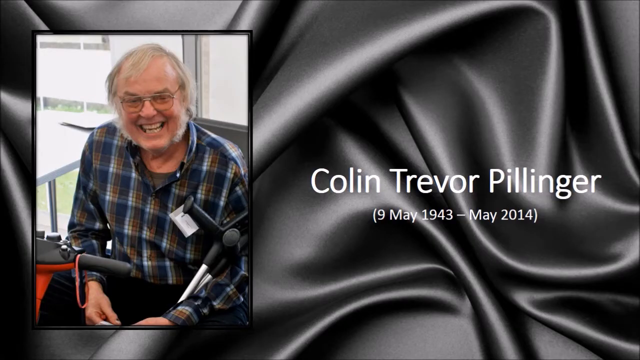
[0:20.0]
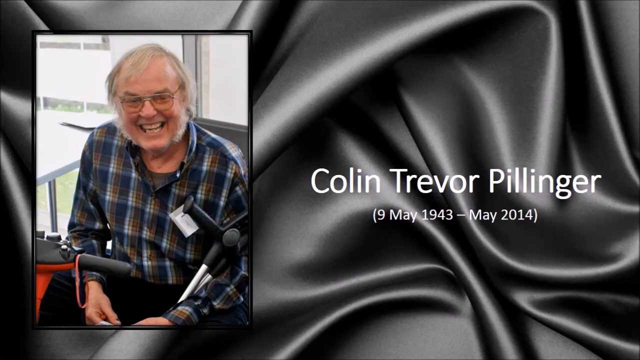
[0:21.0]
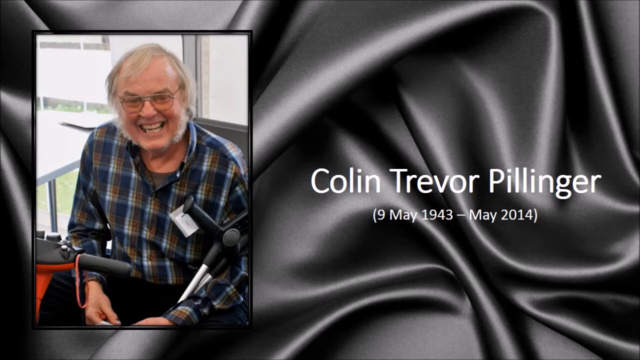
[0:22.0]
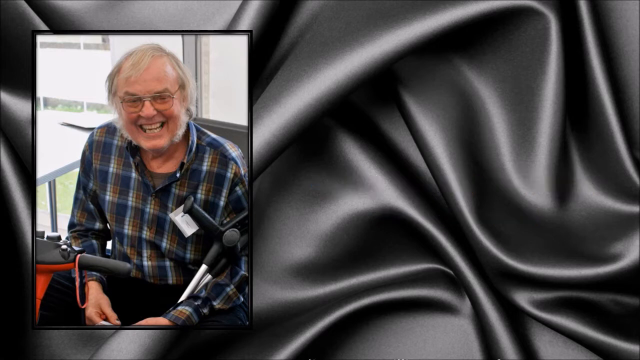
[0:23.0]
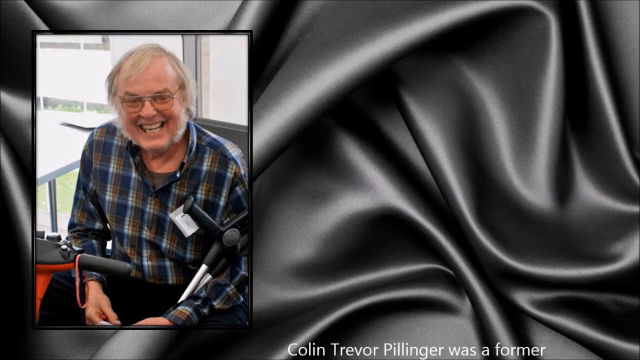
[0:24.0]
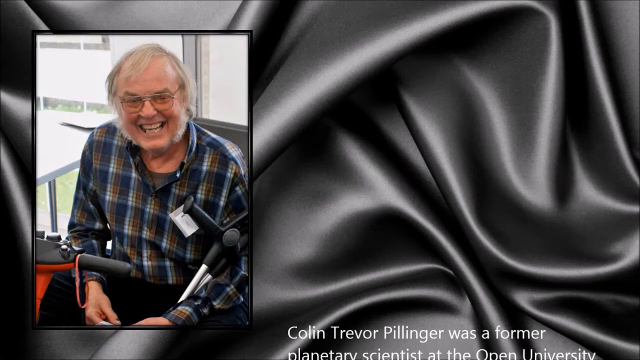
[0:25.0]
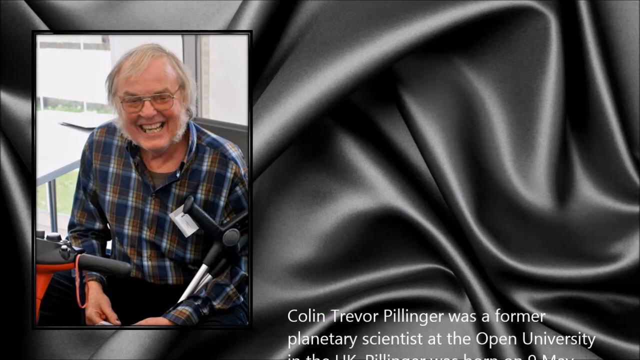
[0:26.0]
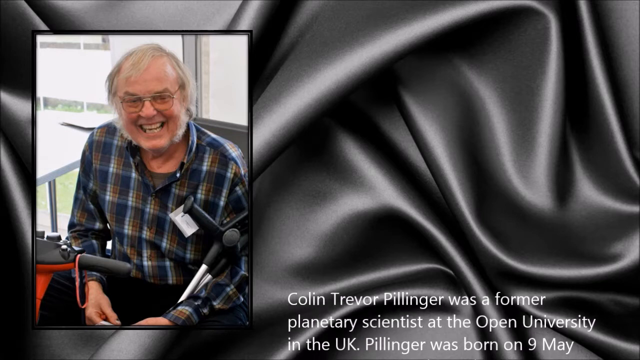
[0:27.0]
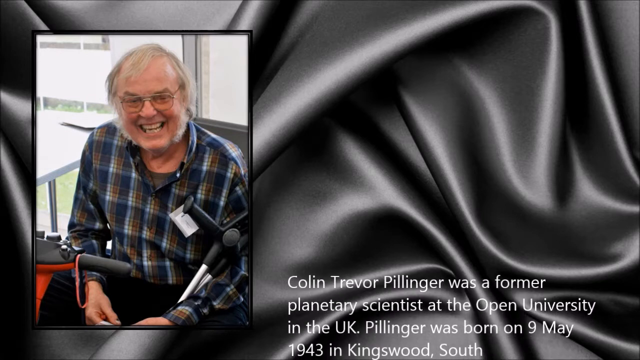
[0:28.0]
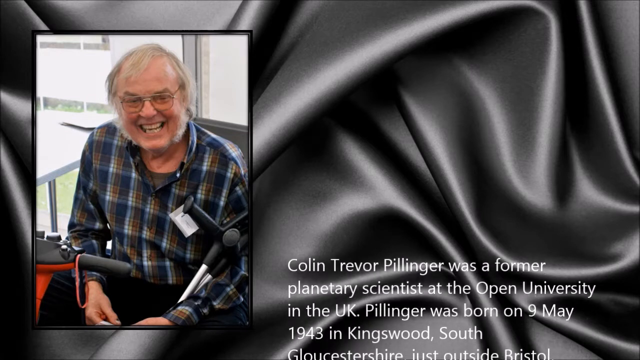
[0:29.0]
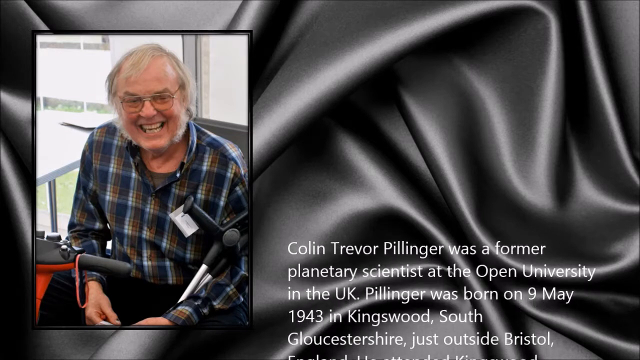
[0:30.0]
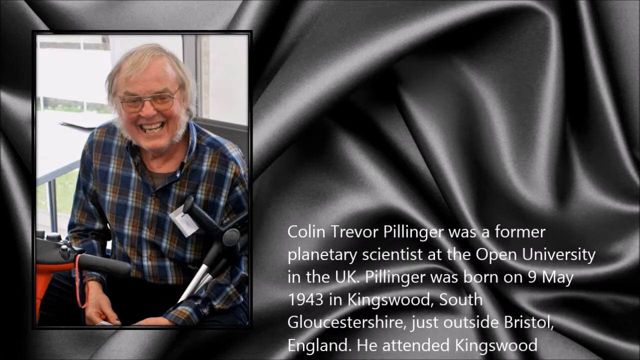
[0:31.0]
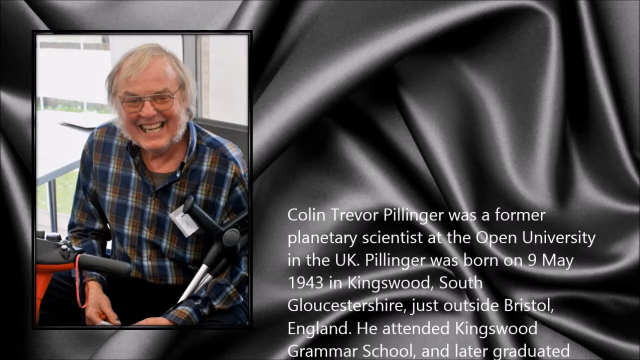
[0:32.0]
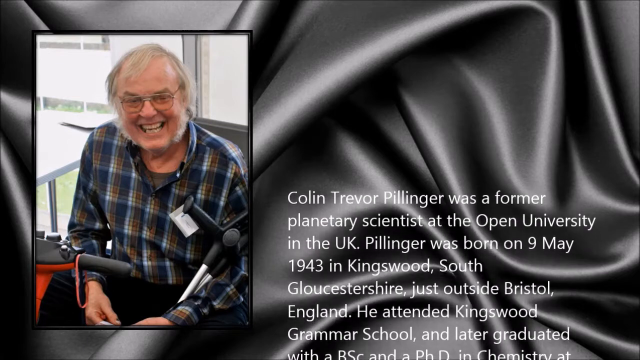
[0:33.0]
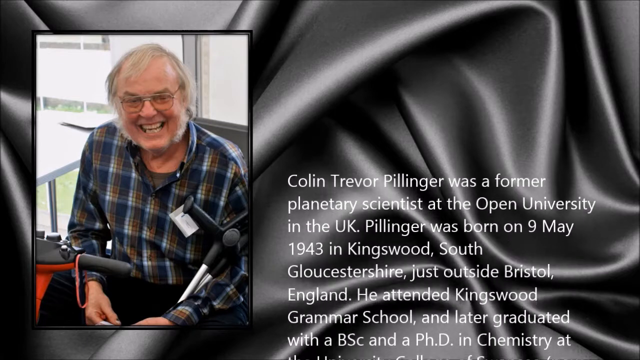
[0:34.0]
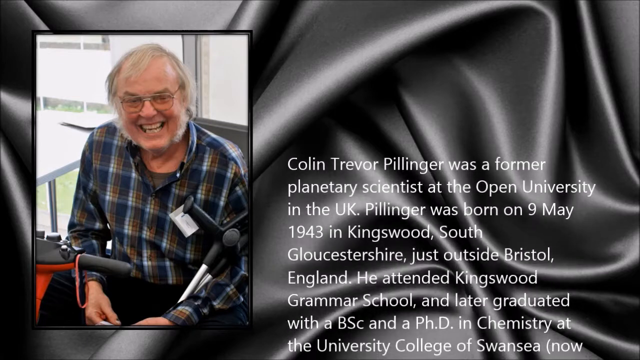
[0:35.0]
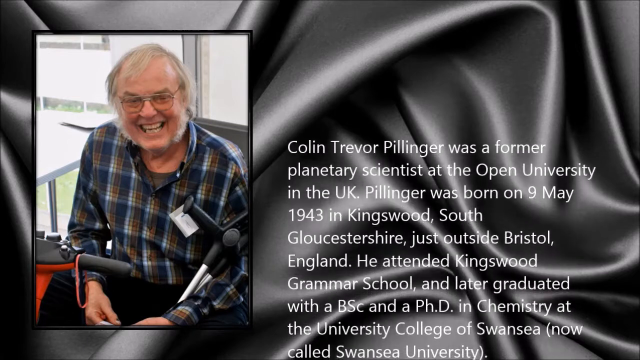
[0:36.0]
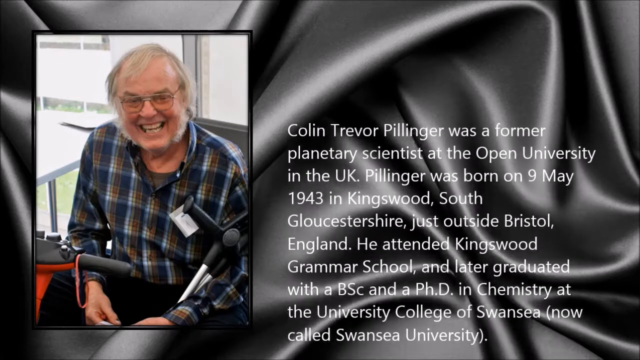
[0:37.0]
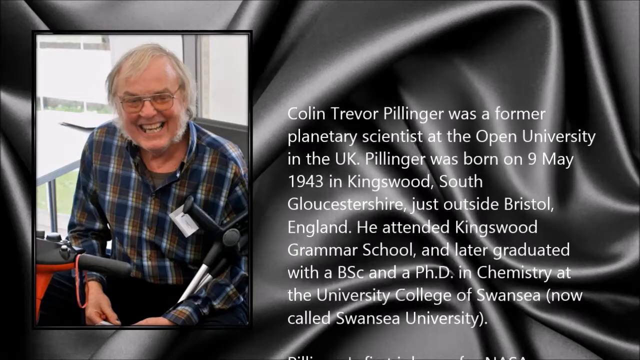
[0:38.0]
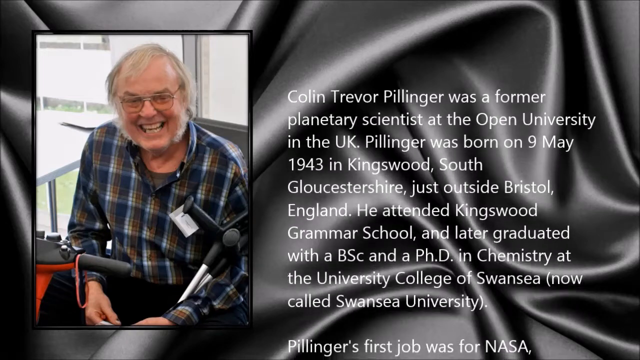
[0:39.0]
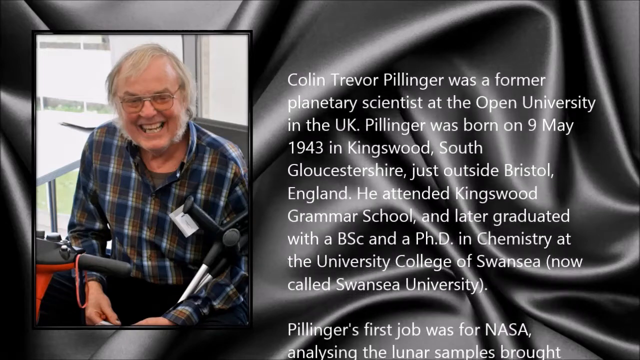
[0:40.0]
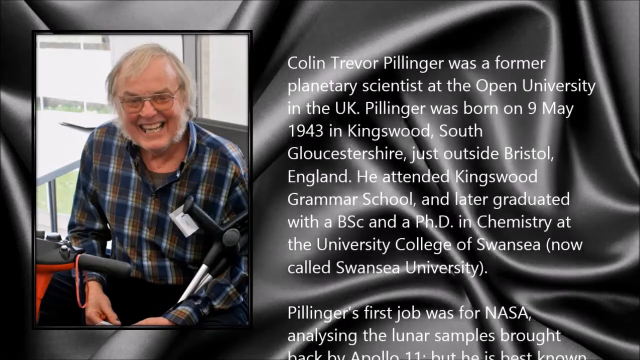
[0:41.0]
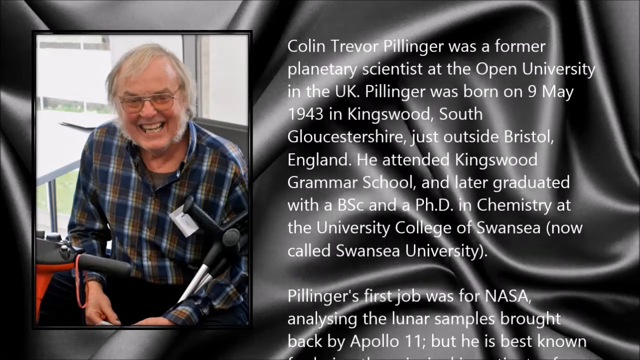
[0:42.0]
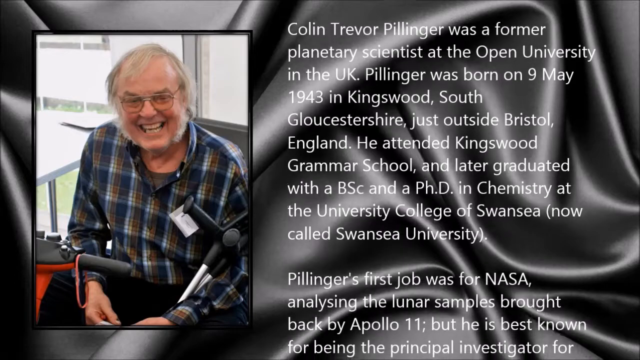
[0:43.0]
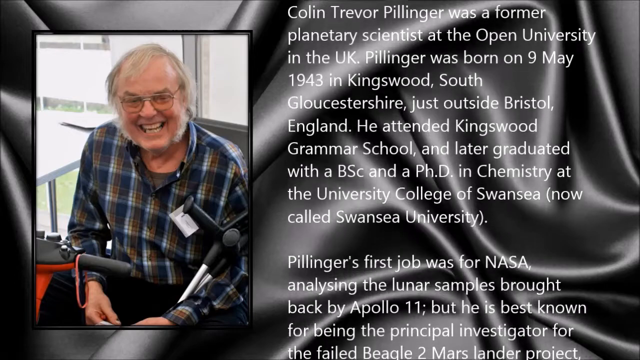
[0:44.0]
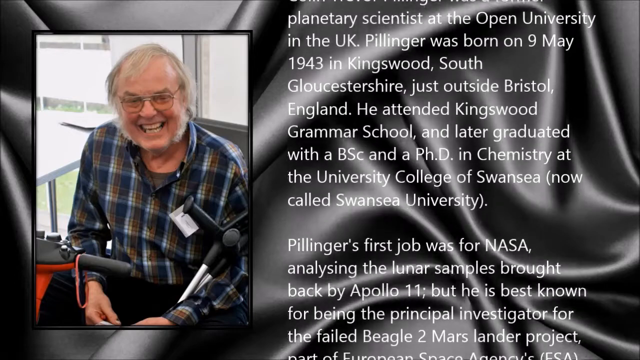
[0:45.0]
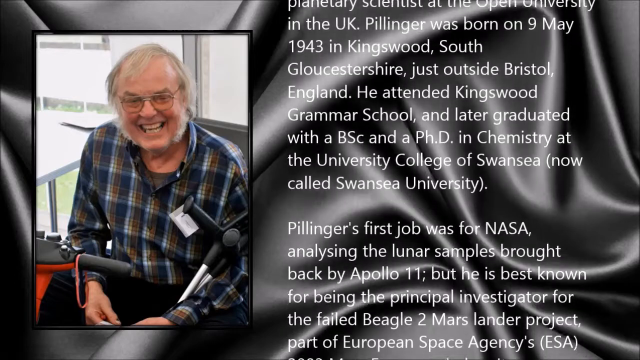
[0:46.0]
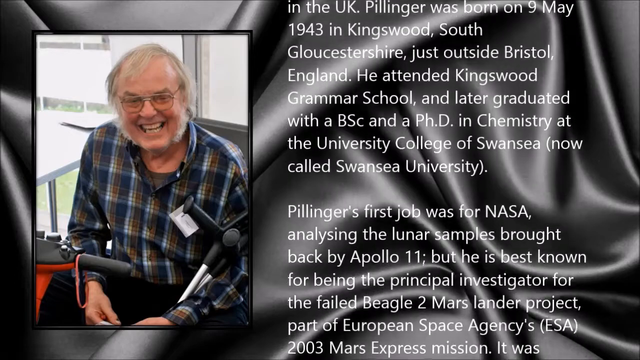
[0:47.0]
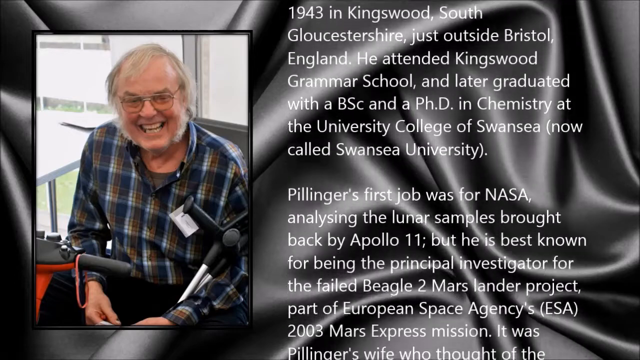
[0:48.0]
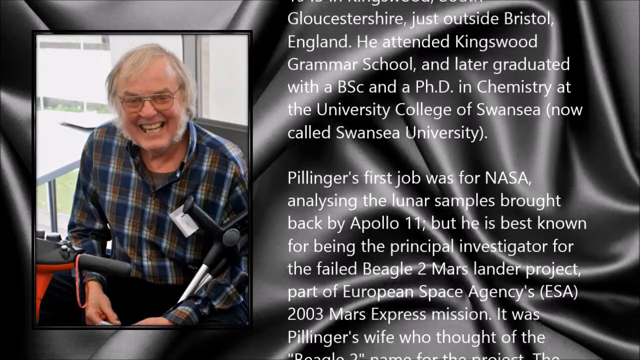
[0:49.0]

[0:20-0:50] The image of Colin Trevor Pillinger shows a man sat on a mobility scooter, smiling towards the camera, with glasses, white hair, a beard and a checked shirt. His name, "Colin Trevor Pillinger", is to the right of the image, with the dates "9th of May 1943 to May 2014" underneath. Both the image and the writing are on a black silk background, and the font is white. The name disappears, and white text about Colin Trevor Pillinger's early life appears and pans upwards. The text states that he was a scientist at the Open University and was born in Kingswood, just outside of Bristol. It gives details of the school he attended and says he later graduated with a PhD. It also covers his early career, stating that he worked for NASA.